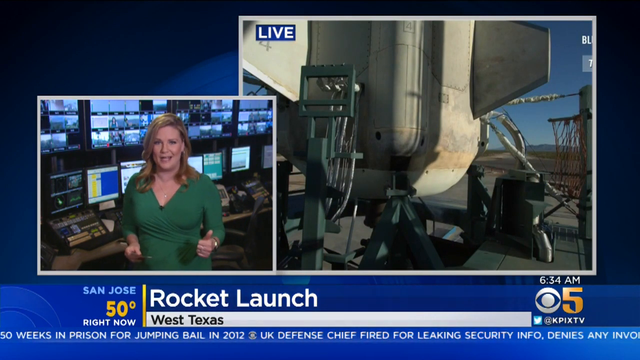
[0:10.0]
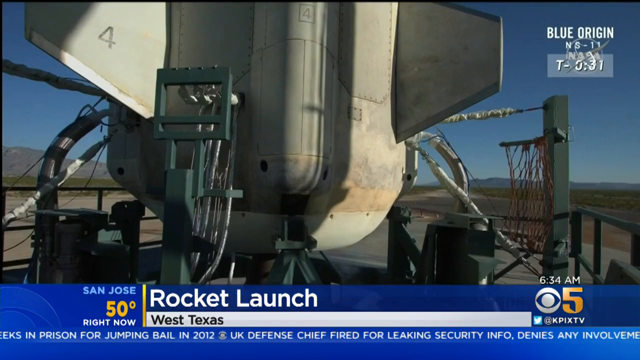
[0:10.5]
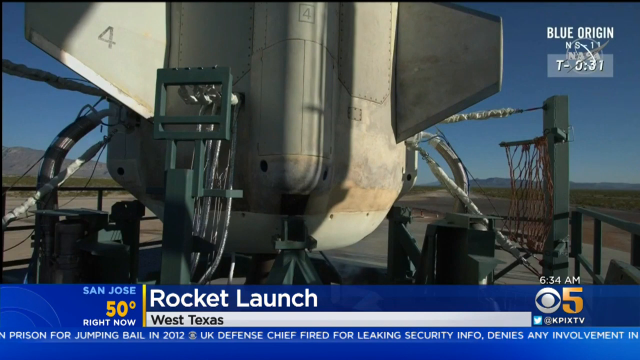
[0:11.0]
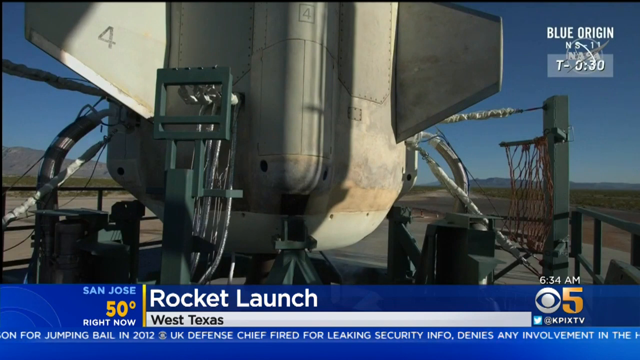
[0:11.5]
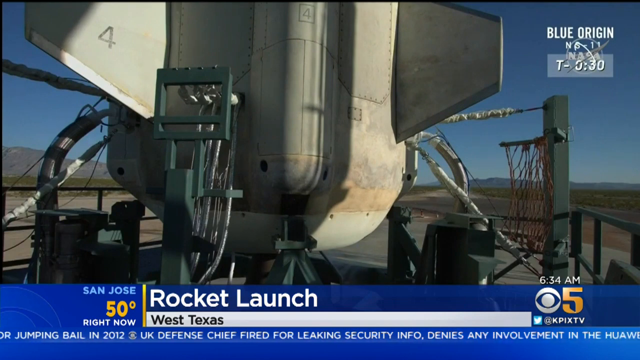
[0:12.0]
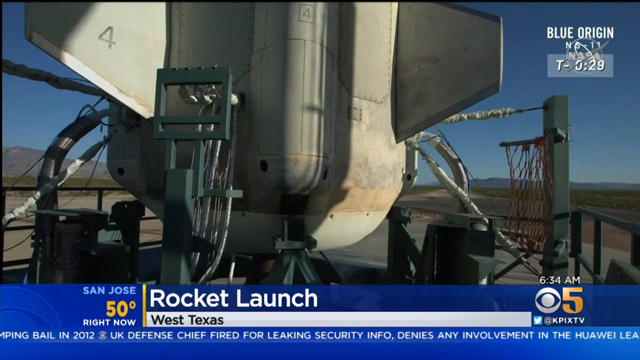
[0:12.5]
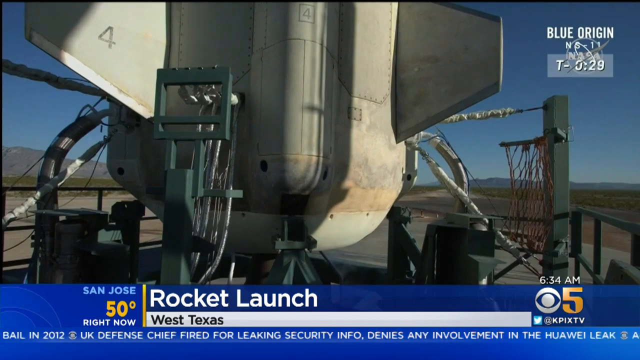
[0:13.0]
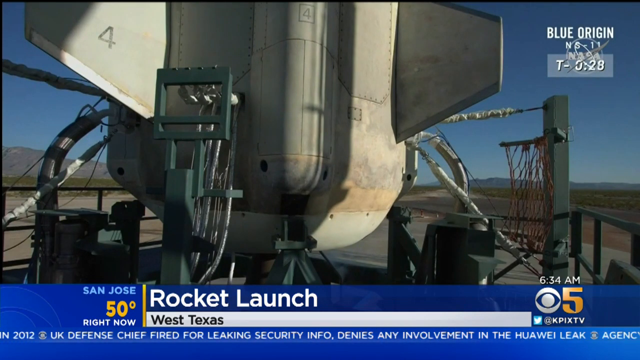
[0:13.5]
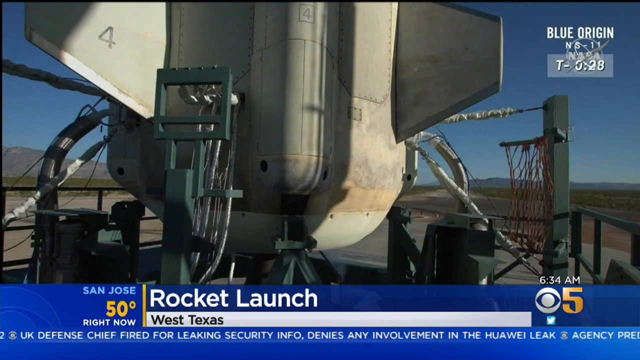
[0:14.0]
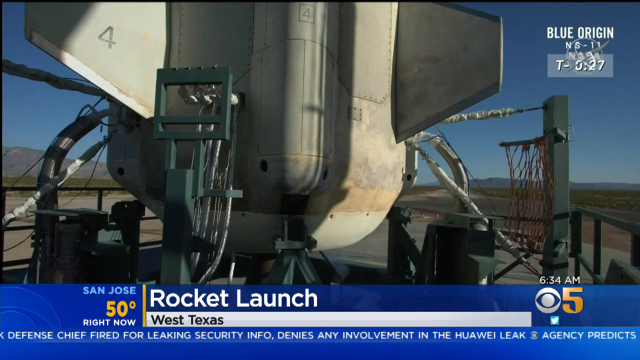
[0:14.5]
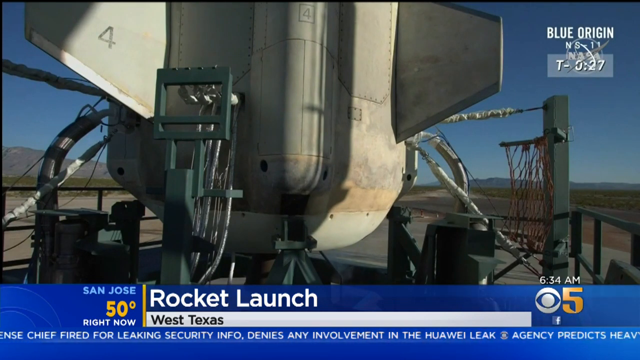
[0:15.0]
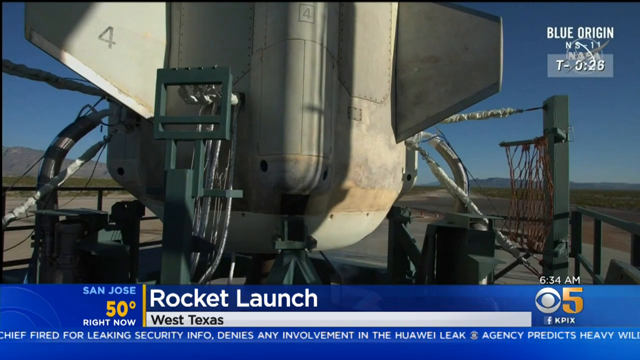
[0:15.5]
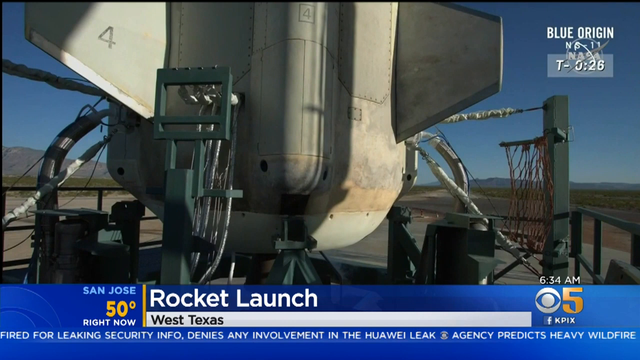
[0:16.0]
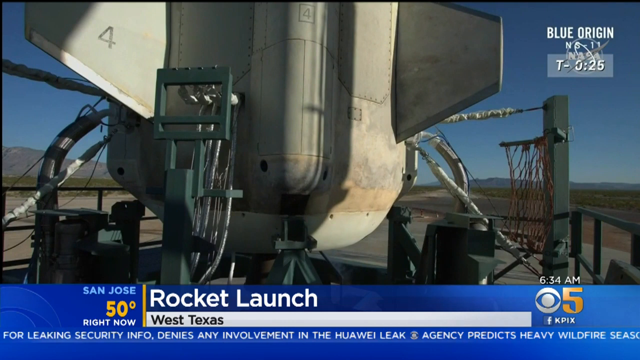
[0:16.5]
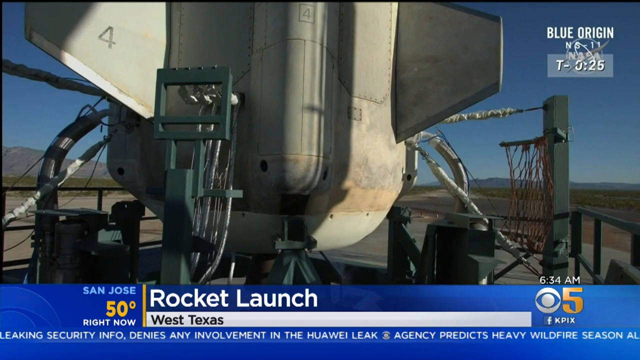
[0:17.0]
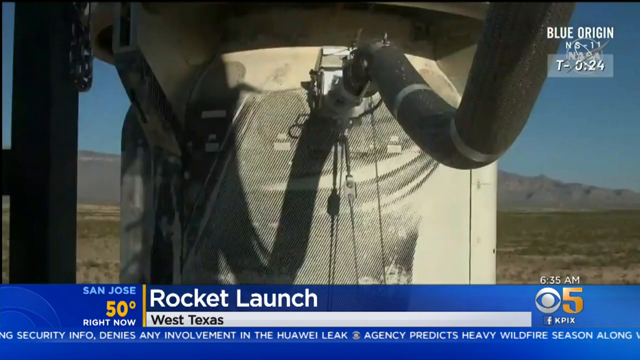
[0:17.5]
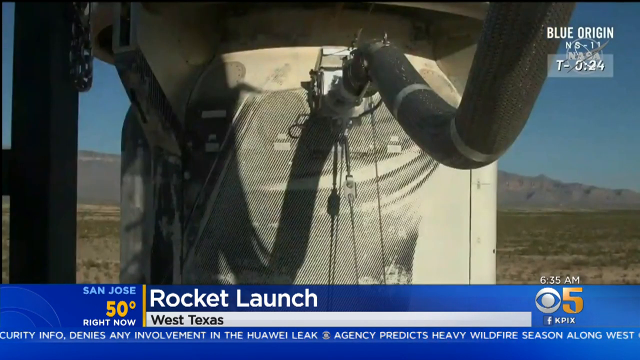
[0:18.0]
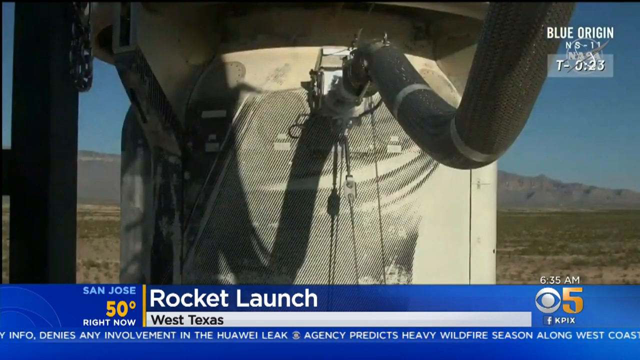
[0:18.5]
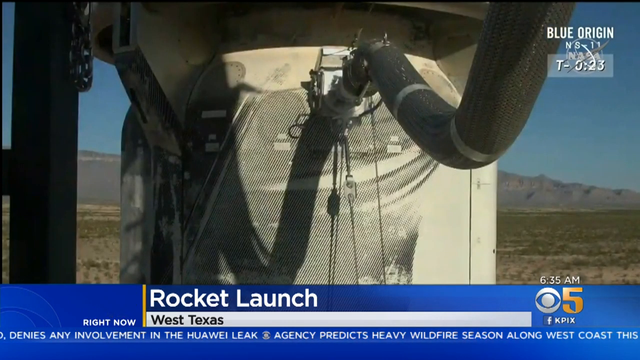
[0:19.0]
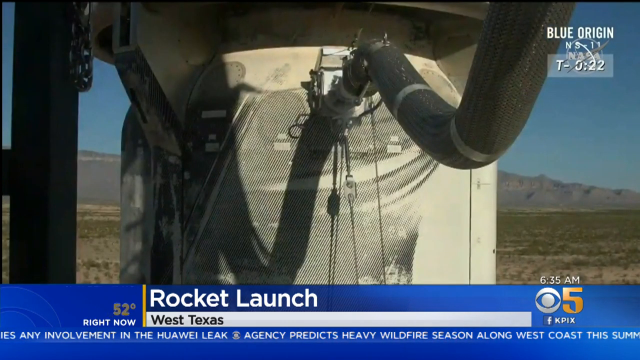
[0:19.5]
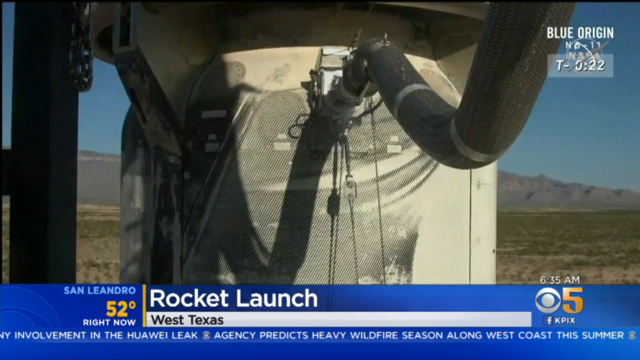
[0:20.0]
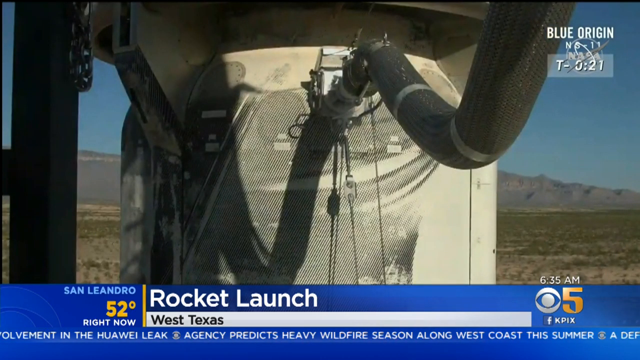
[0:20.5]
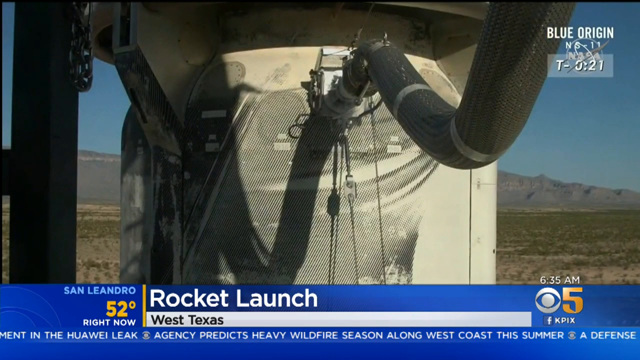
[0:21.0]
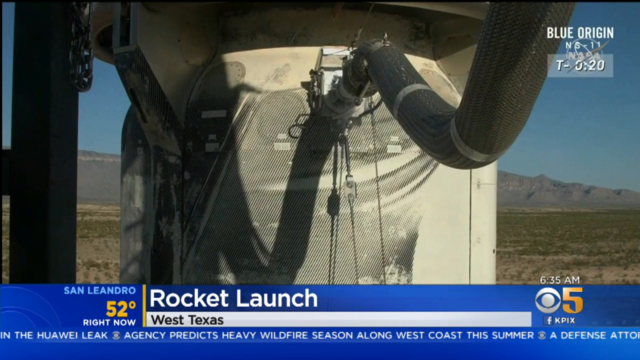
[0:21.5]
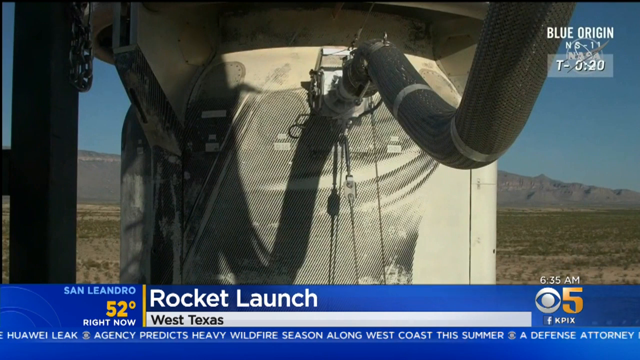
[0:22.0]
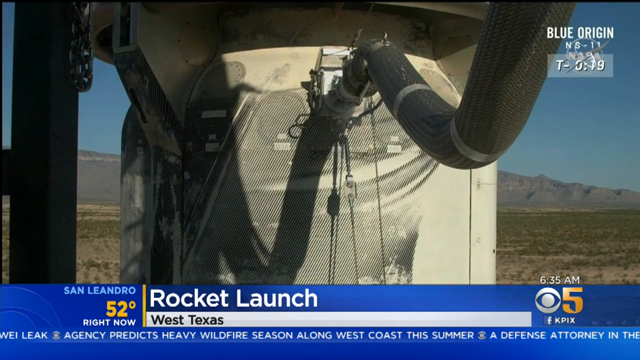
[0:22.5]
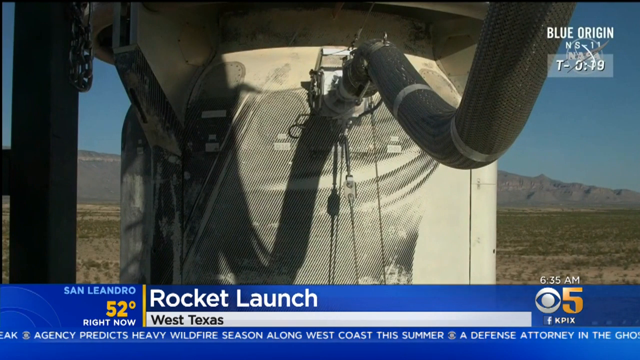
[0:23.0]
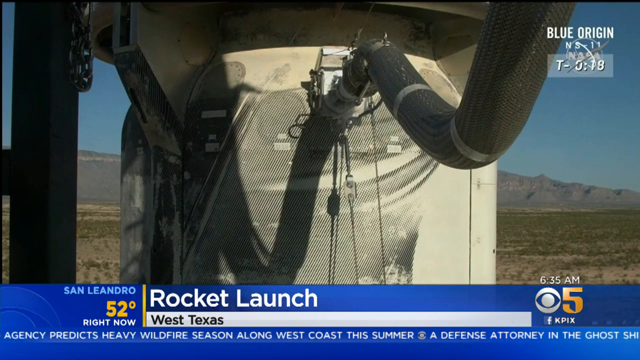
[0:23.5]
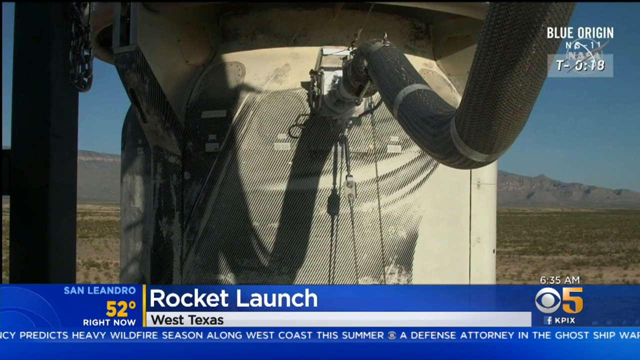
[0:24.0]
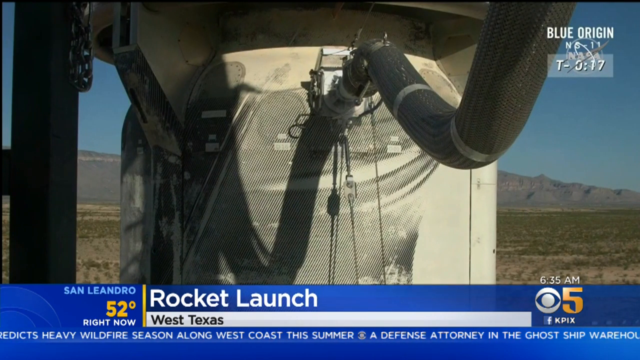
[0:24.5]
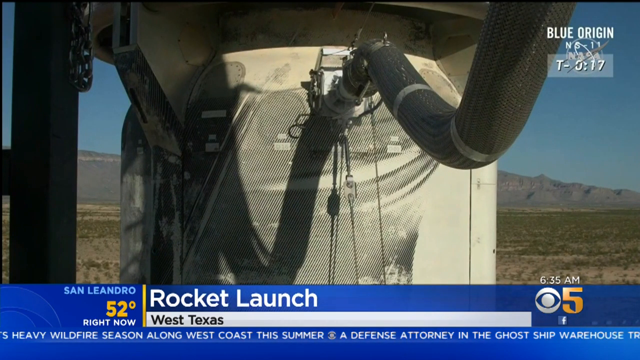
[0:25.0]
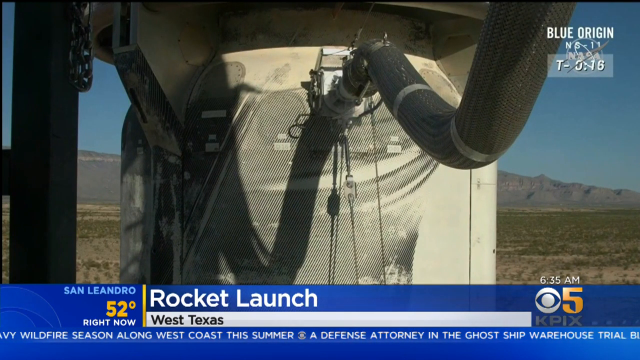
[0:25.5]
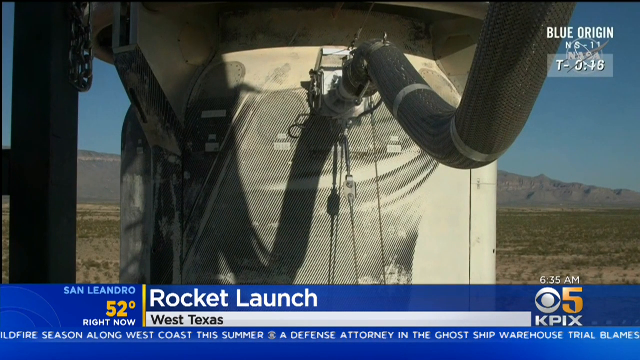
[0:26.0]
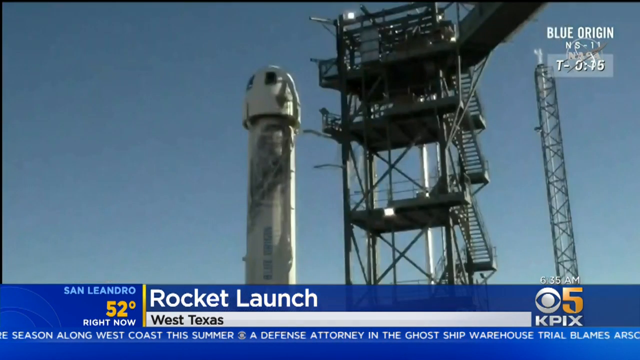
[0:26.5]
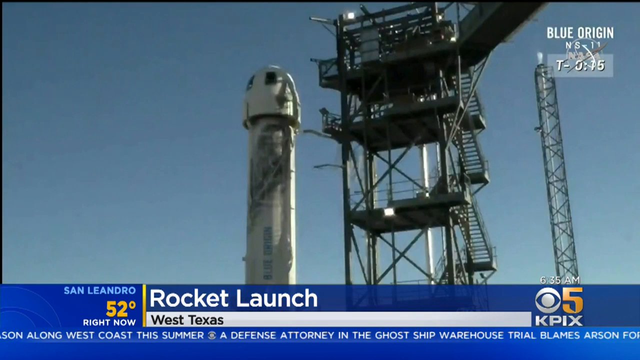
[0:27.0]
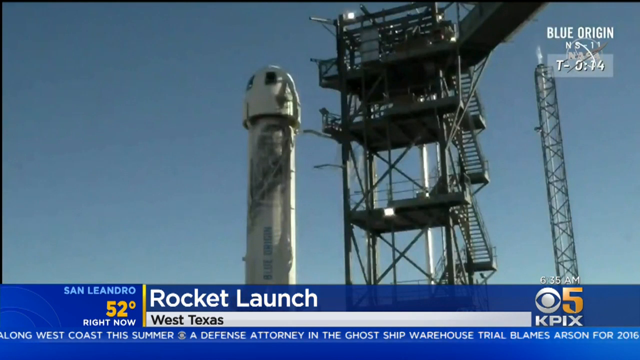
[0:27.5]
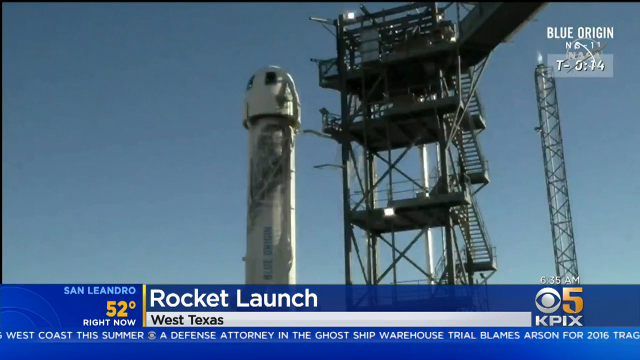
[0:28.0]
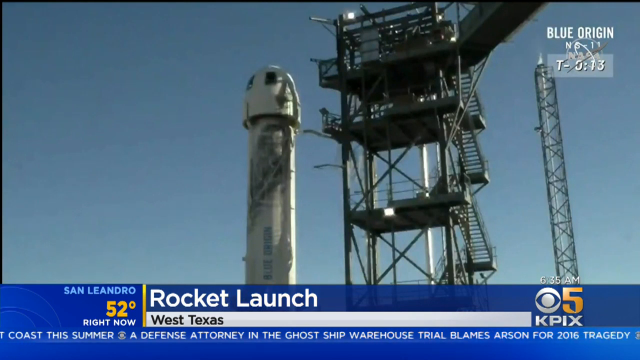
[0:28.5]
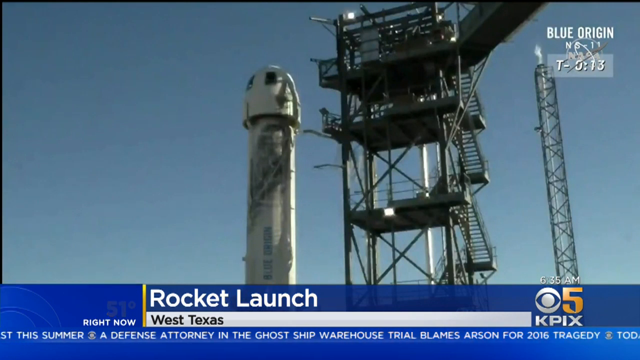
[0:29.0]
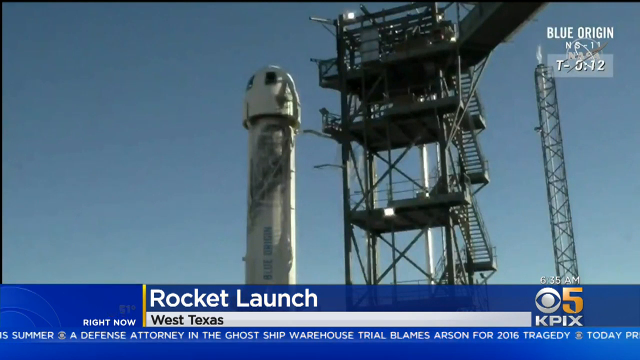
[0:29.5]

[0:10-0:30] The view zooms into a big picture of the bottom of a rocket on a clear, sunny day, with a green field and some mountains in the background. A blue banner runs all the way across the bottom of the screen, showing San Jose, 50 degrees, "rocket launch west Texas" and 6:34 a.m., with the channel 5 news logo at the bottom. In the top right of the screen is "blue origin" and "T minus" with a countdown for the rocket launch, slowly counting down 20, 19, 18 and so on. The location in the bottom left then changes to "San Leandro," at 52 degrees. The video pans out to show various compartments of the rocket, then shows what looks like the top of a rocket, and beside it what looks like some type of fuse or smoke coming out of a very long tower.